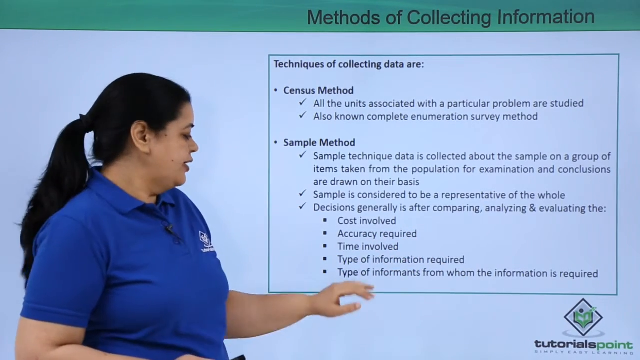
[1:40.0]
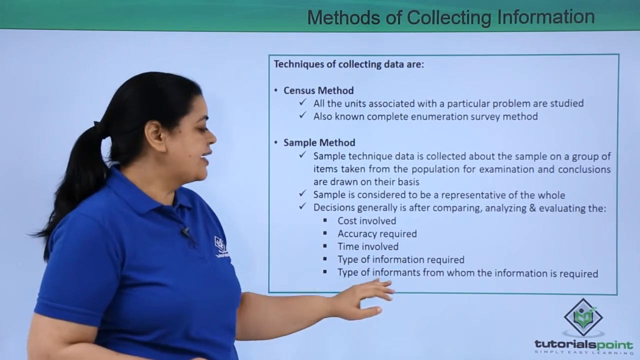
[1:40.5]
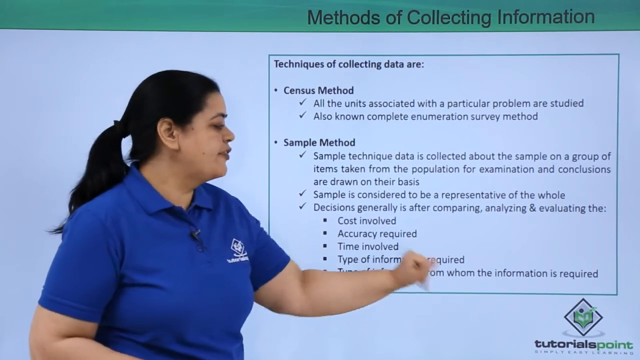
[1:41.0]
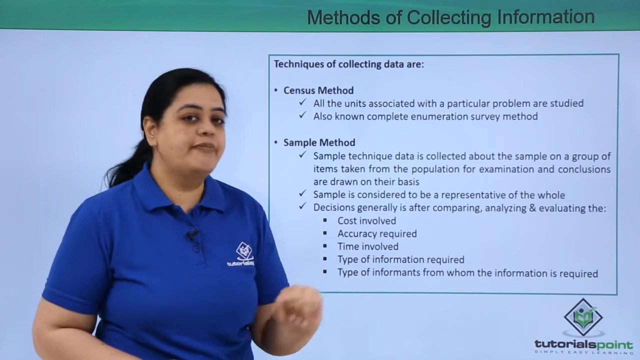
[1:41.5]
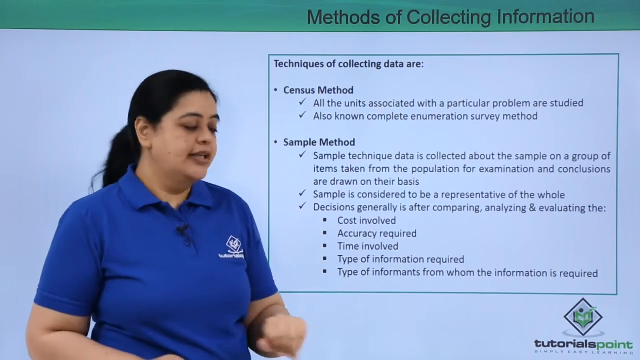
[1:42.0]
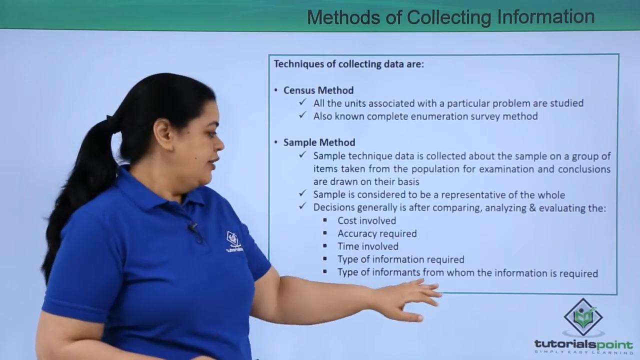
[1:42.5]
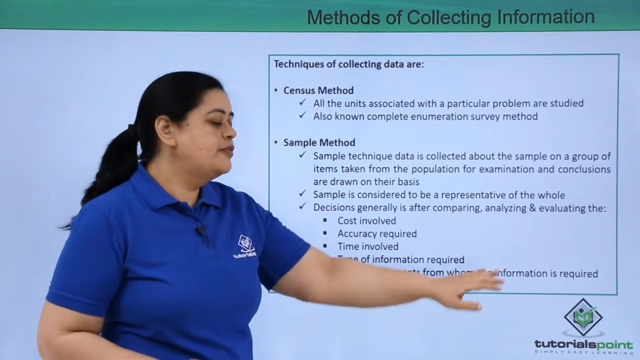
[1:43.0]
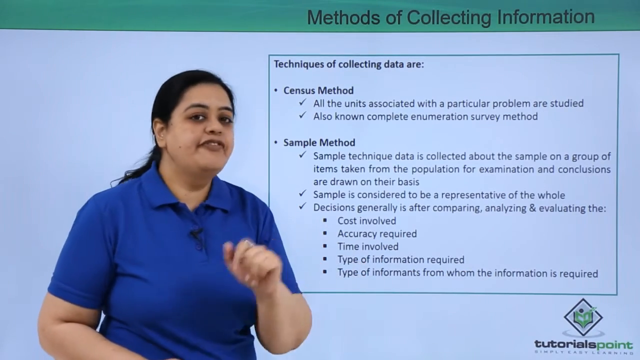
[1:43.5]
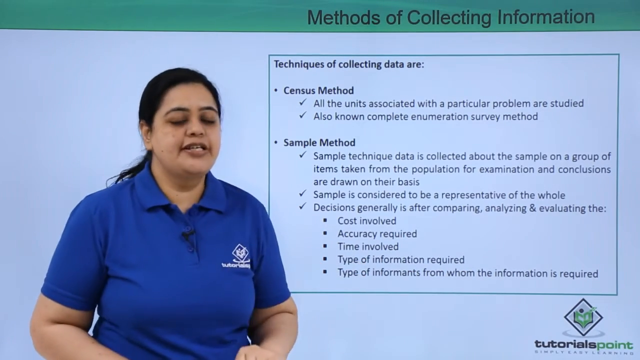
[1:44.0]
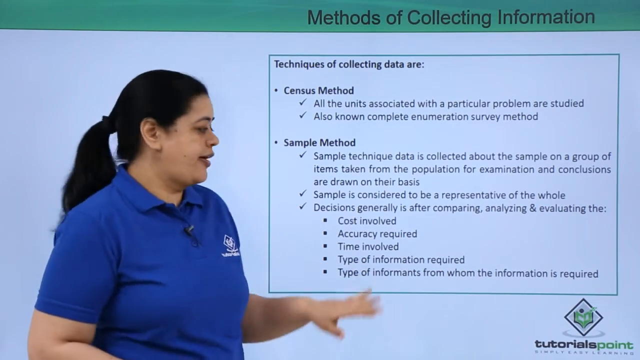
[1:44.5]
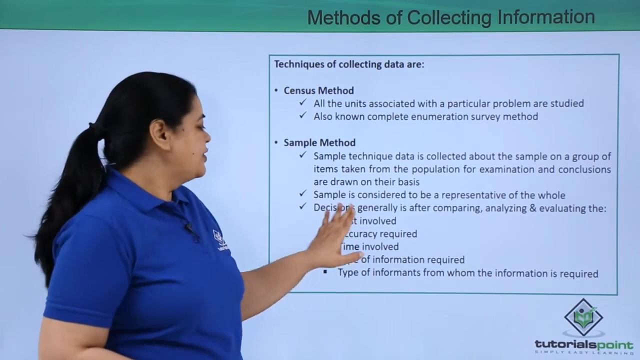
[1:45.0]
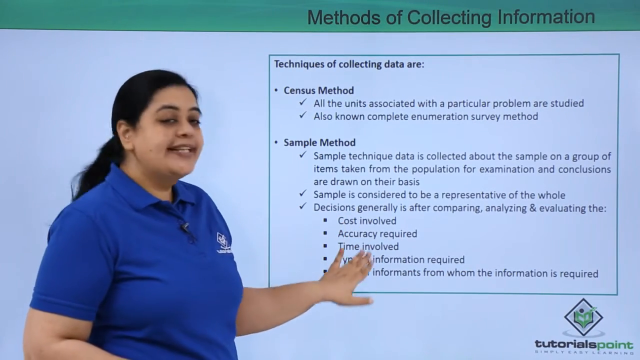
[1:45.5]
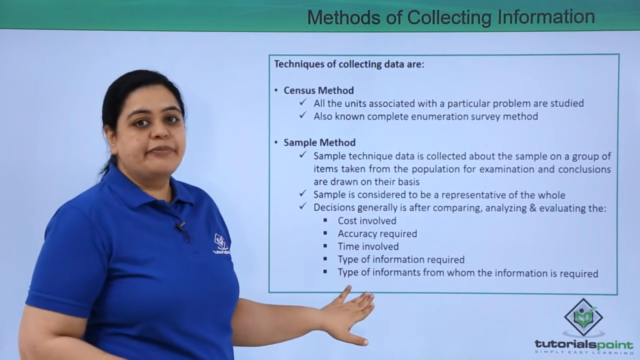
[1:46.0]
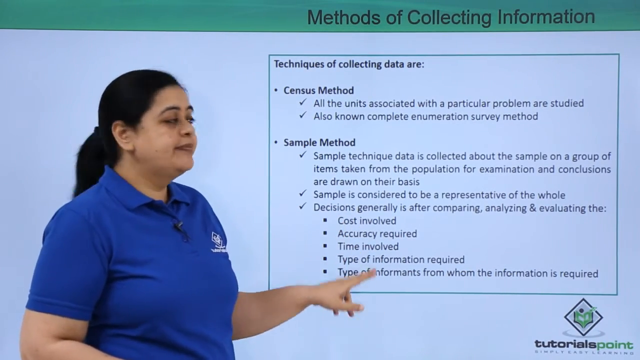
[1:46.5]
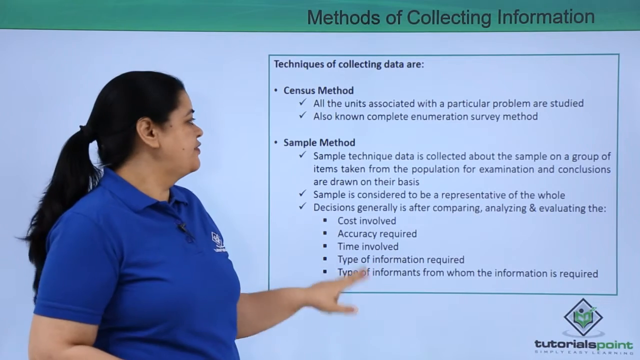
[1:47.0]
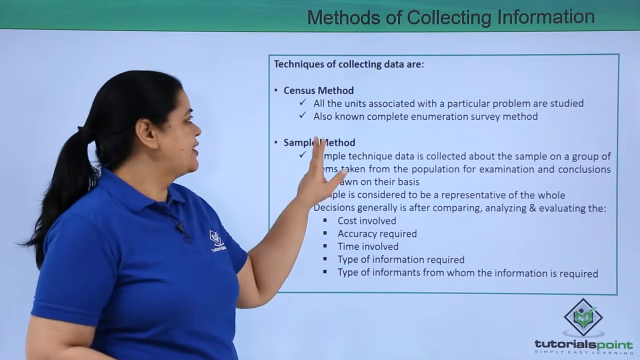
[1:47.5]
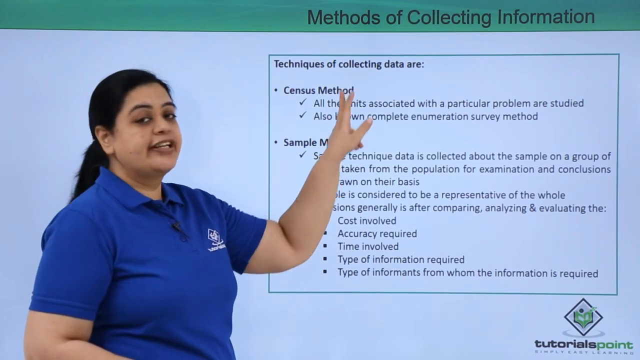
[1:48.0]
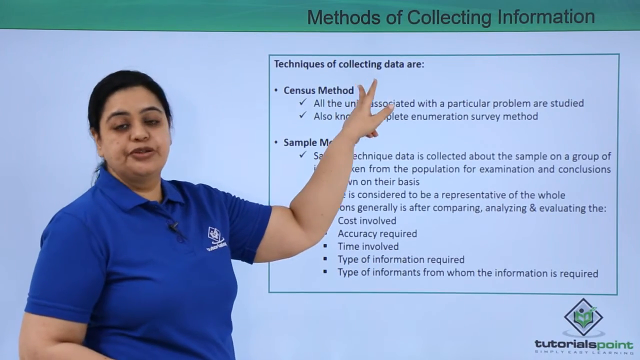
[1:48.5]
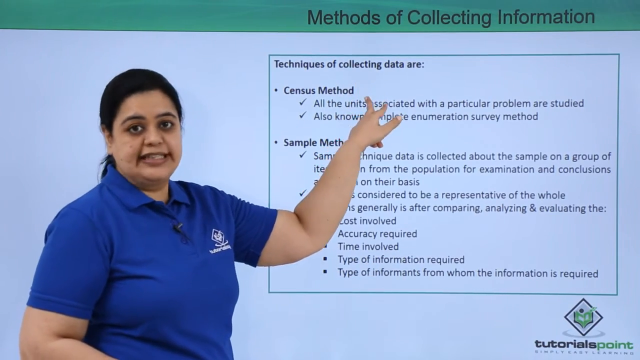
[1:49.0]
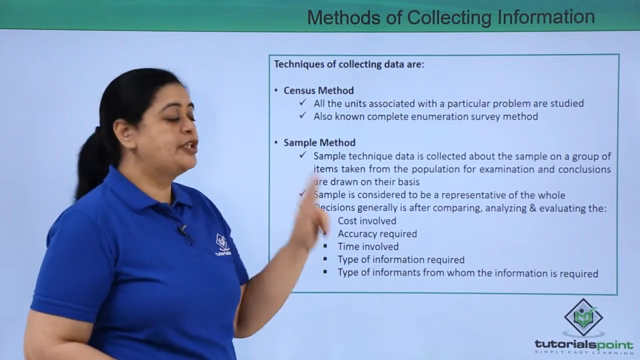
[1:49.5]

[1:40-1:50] The same woman lectures on methods of collecting information, gesturing a lot at specific points marked with check marks or bullet points in the presentation on the screen behind her, possibly a PowerPoint screen. She wears a blue polo, possibly royal blue, with the company logo printed in white on the upper right chest. She has long black hair and a couple of easily visible moles on her face. She wears no earrings or other jewelry, and maybe little or no makeup. The video glitches a few times for a few seconds.